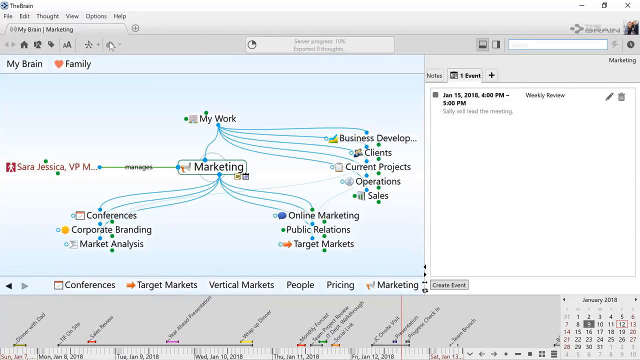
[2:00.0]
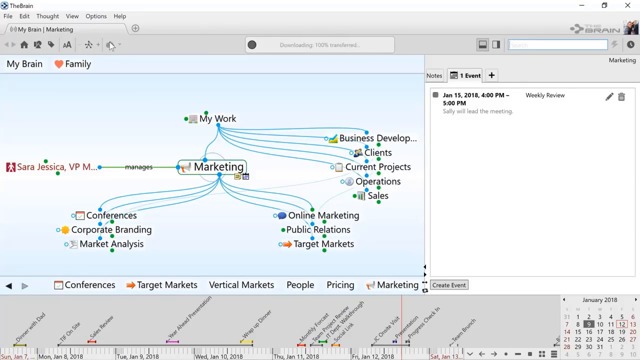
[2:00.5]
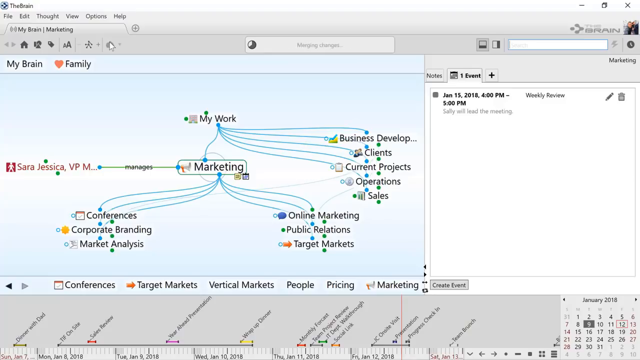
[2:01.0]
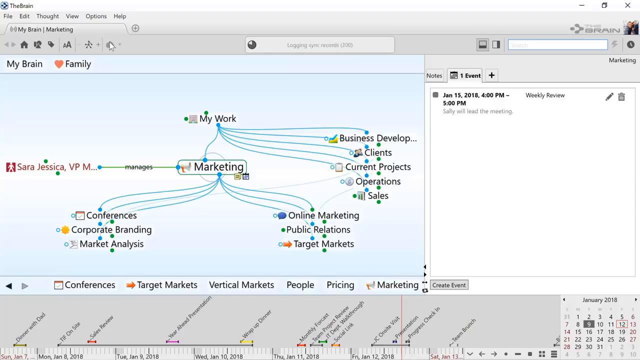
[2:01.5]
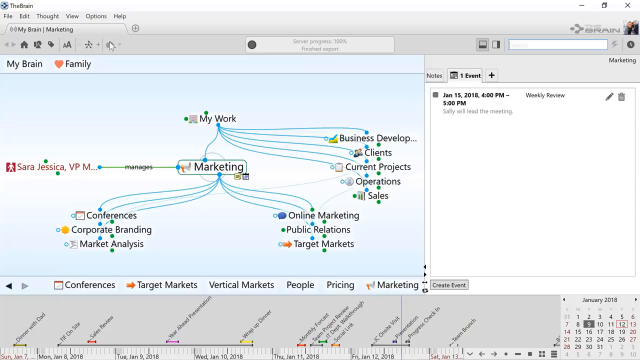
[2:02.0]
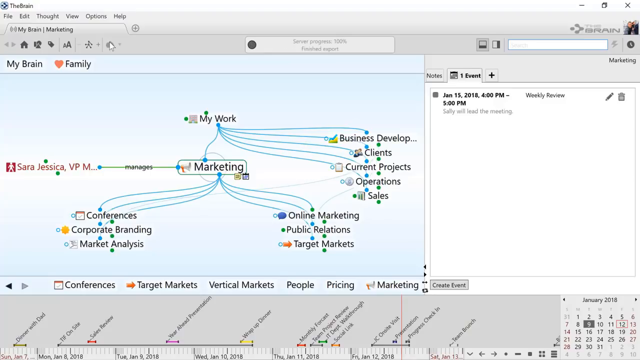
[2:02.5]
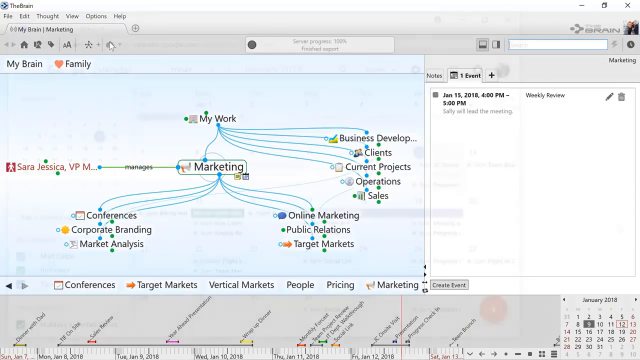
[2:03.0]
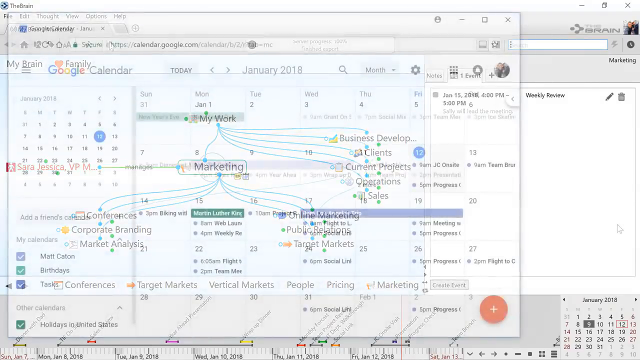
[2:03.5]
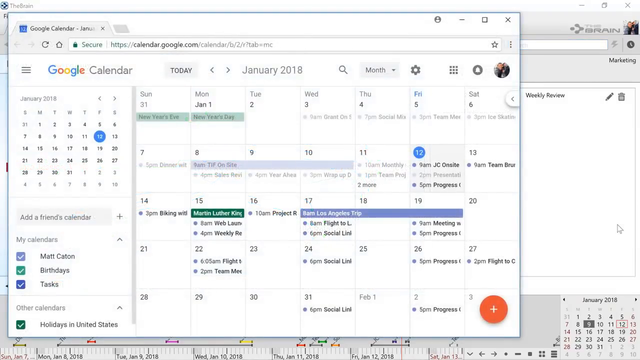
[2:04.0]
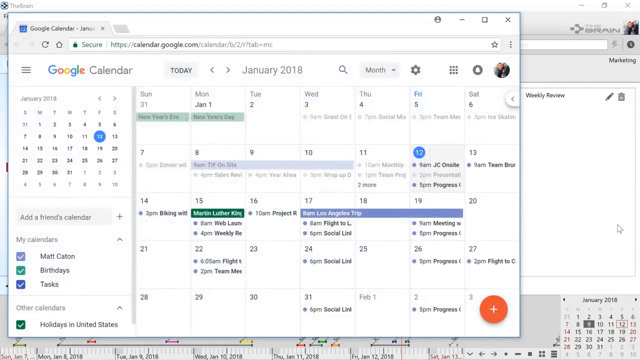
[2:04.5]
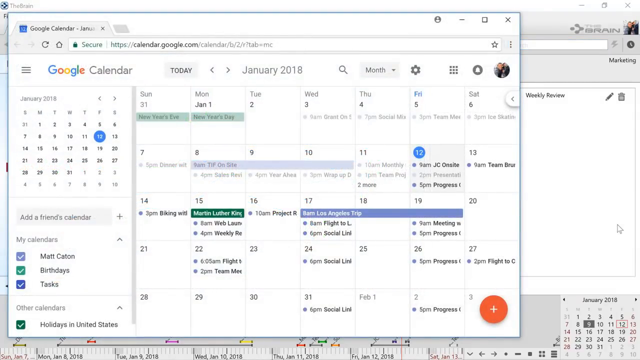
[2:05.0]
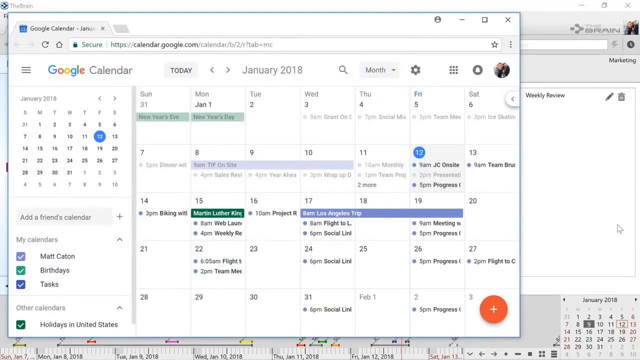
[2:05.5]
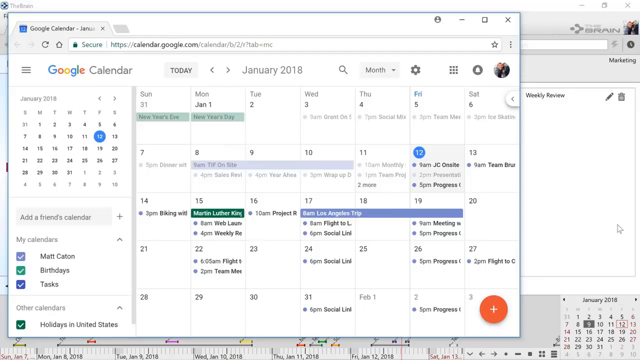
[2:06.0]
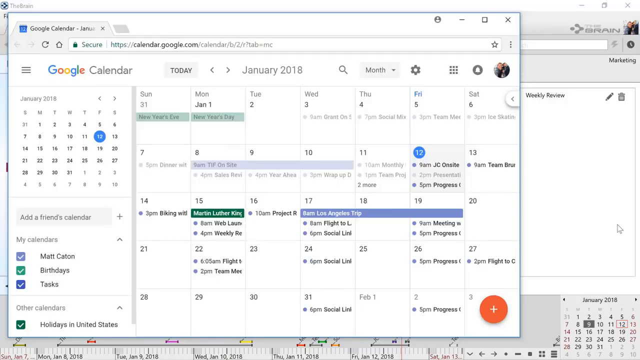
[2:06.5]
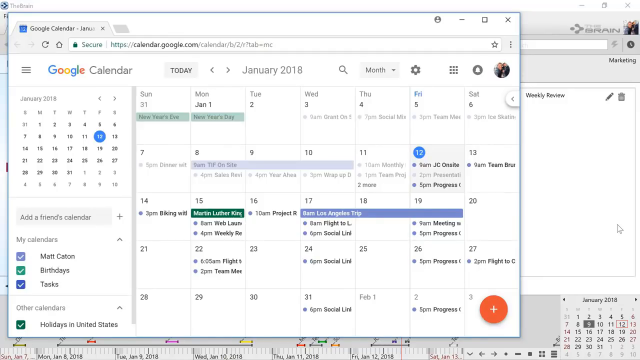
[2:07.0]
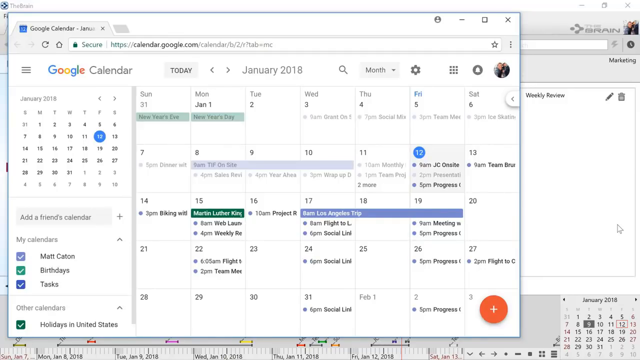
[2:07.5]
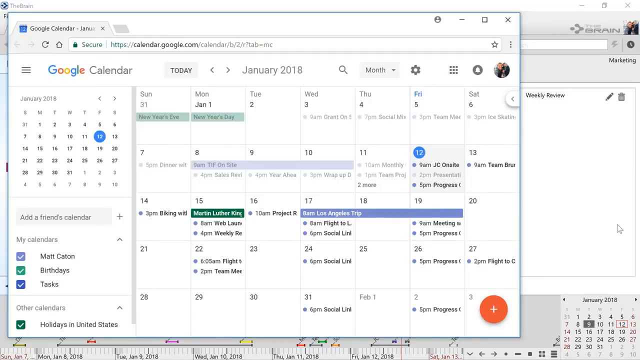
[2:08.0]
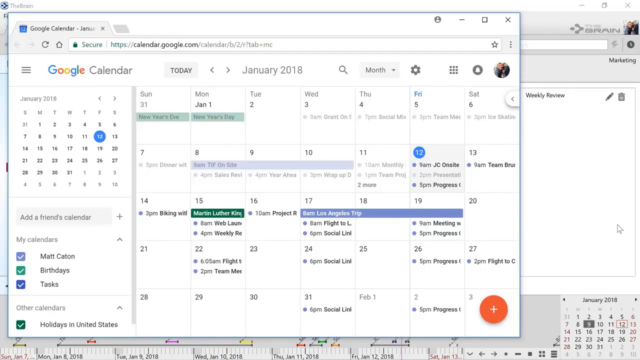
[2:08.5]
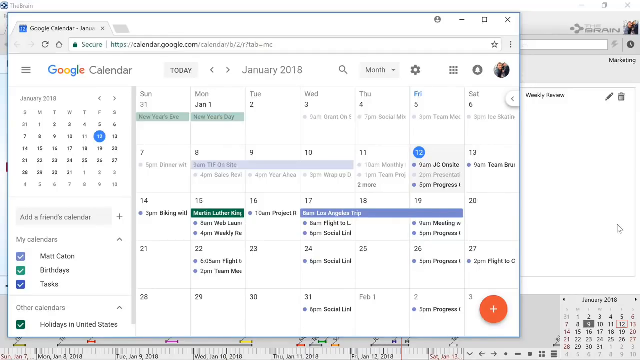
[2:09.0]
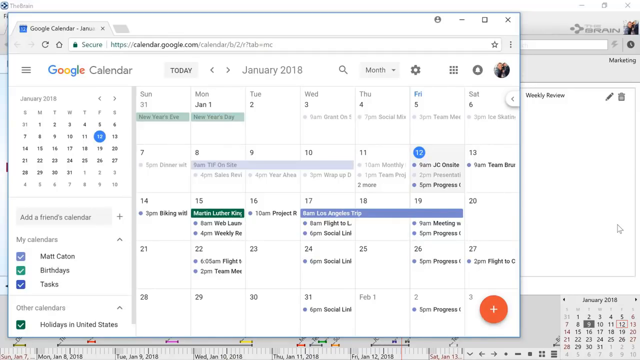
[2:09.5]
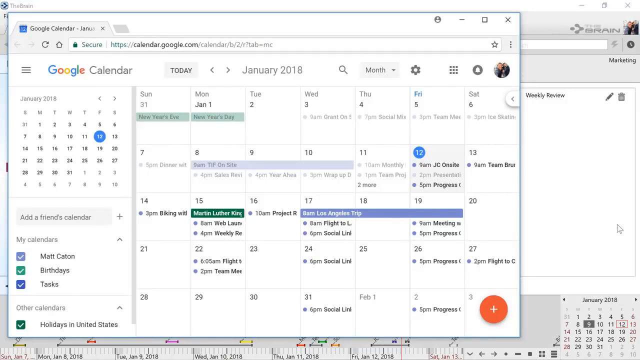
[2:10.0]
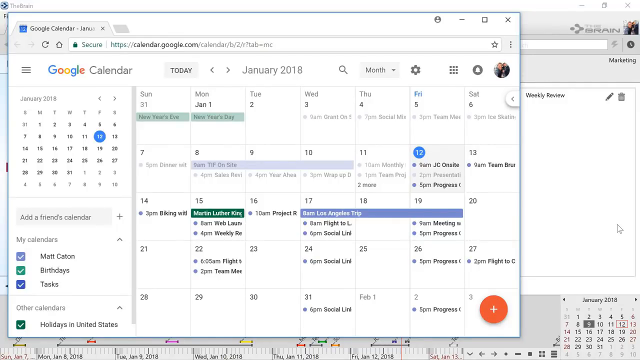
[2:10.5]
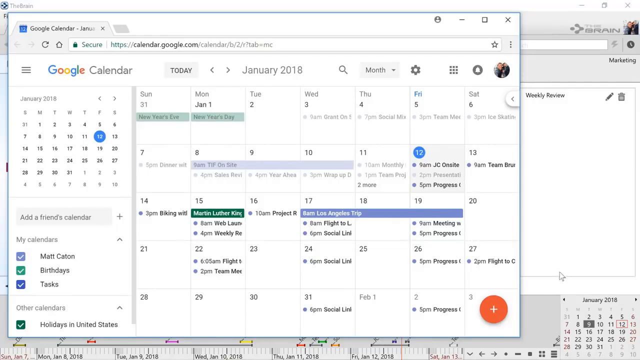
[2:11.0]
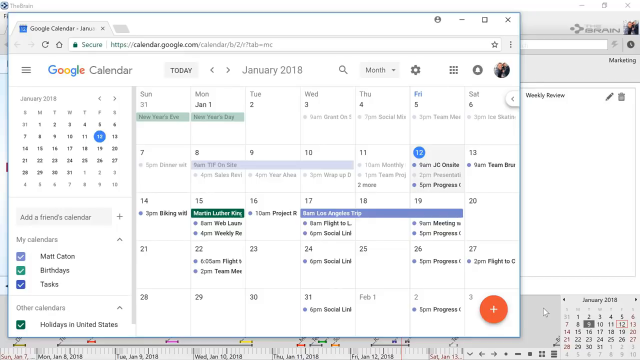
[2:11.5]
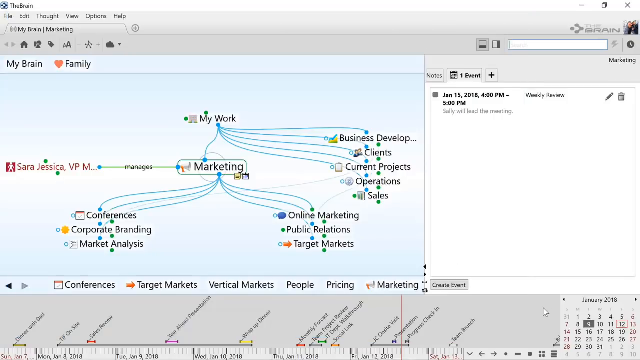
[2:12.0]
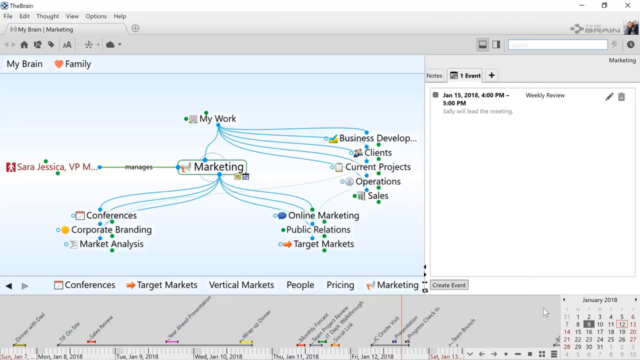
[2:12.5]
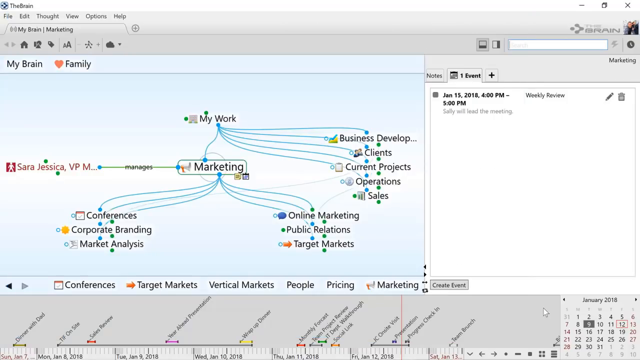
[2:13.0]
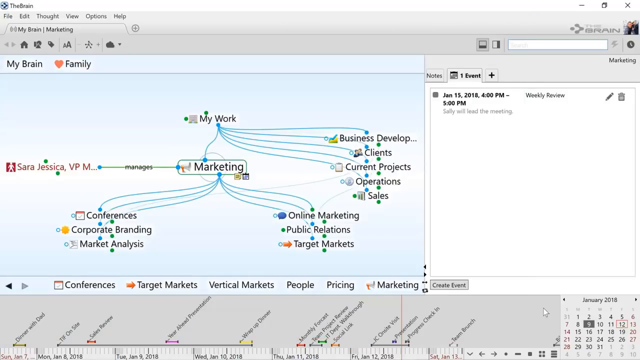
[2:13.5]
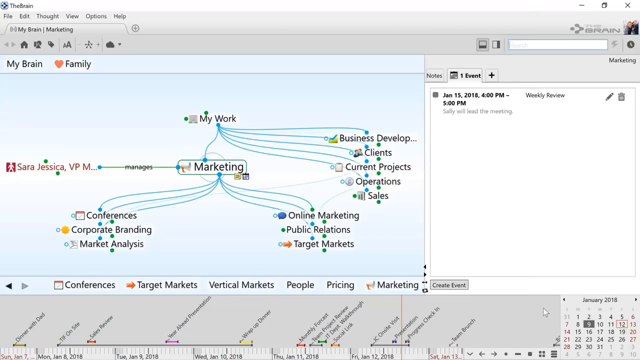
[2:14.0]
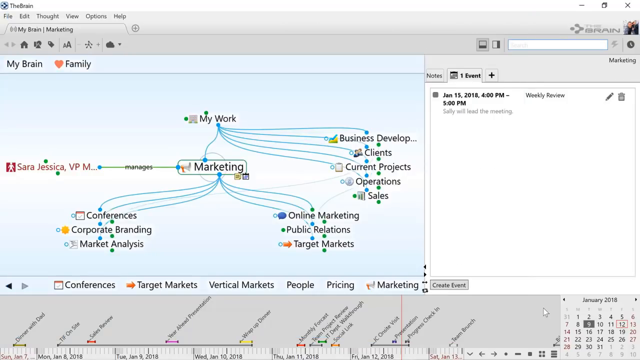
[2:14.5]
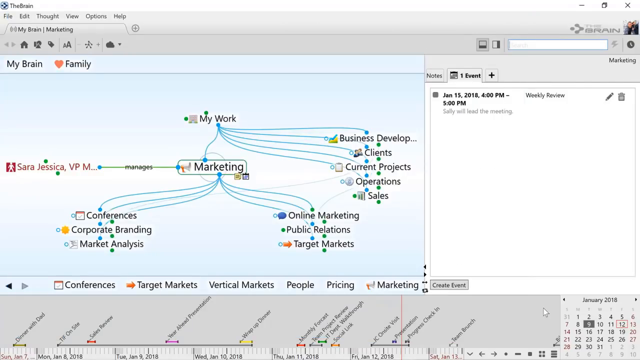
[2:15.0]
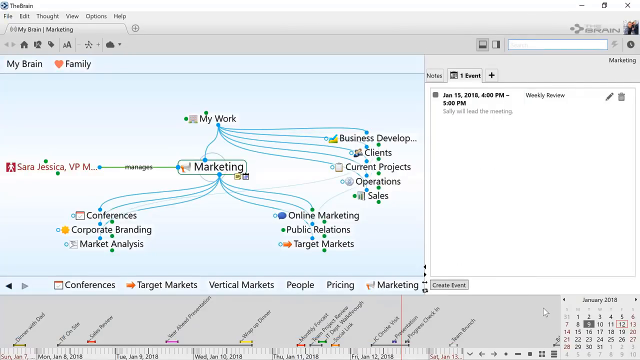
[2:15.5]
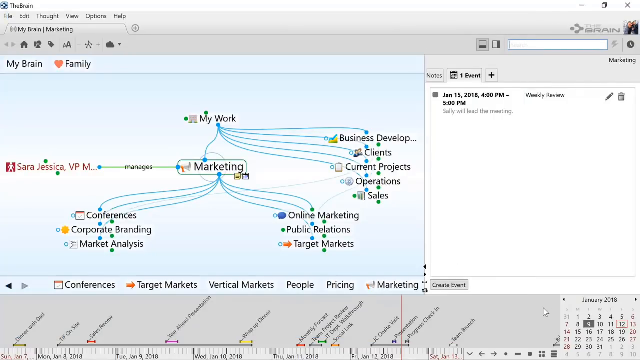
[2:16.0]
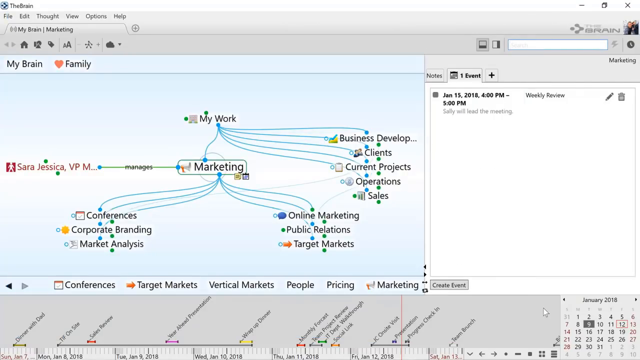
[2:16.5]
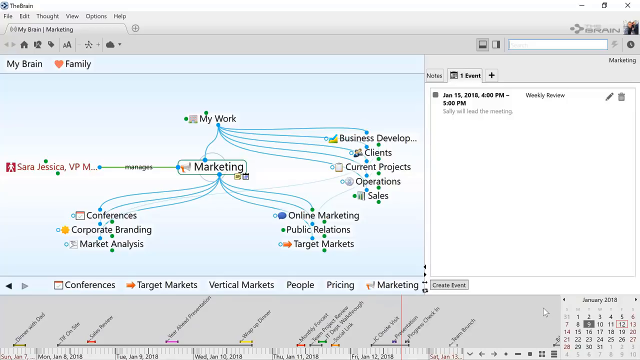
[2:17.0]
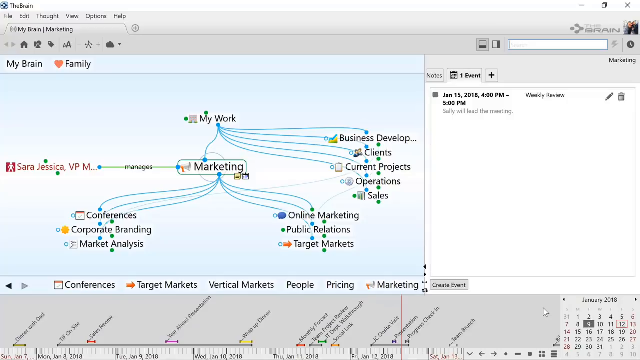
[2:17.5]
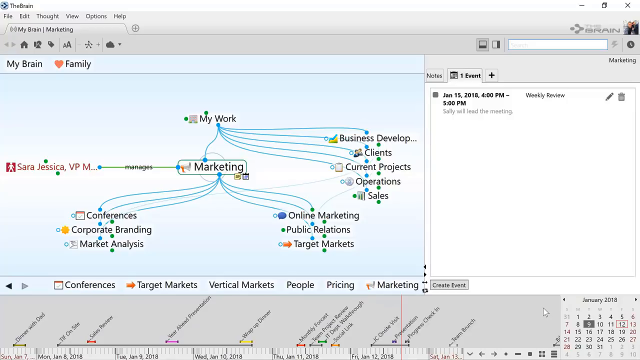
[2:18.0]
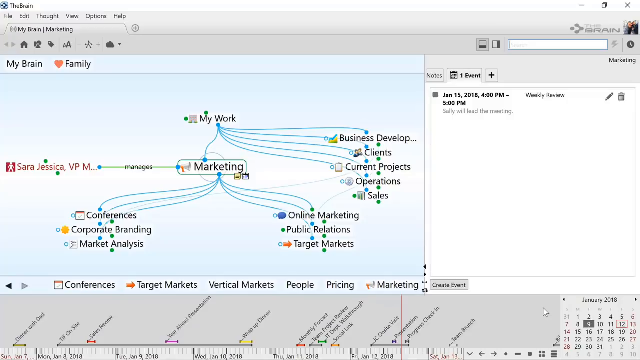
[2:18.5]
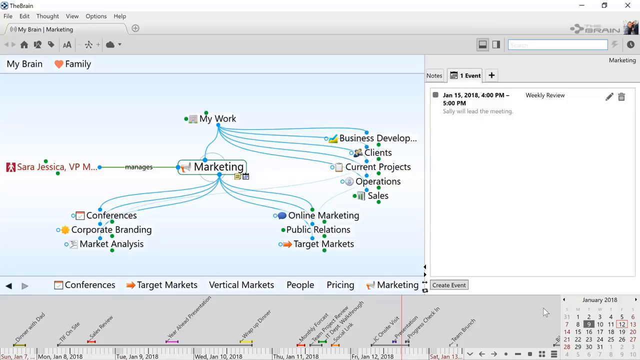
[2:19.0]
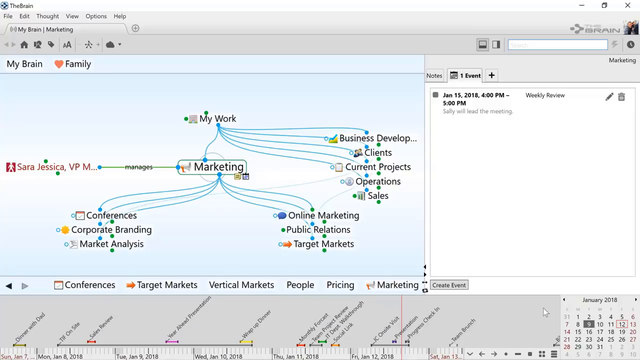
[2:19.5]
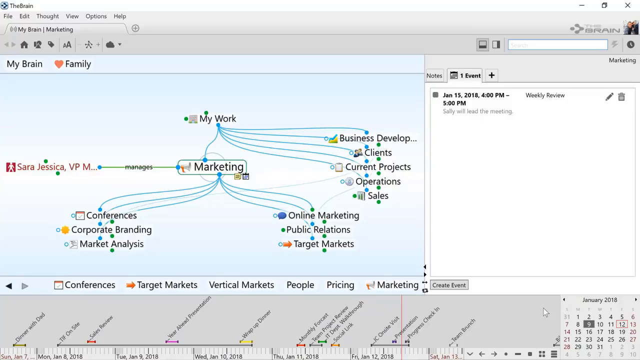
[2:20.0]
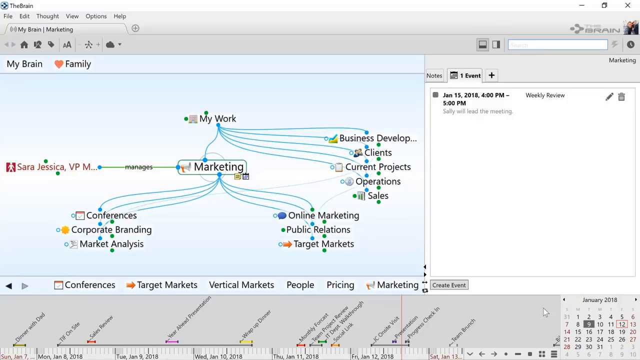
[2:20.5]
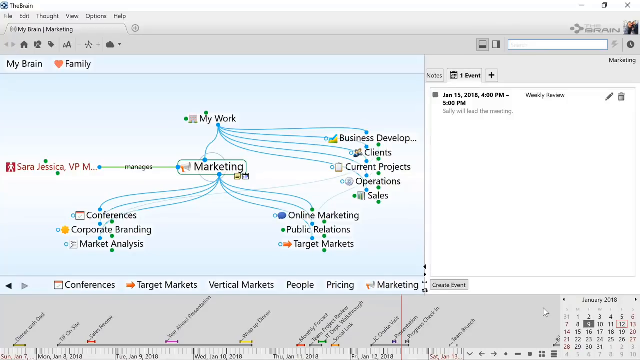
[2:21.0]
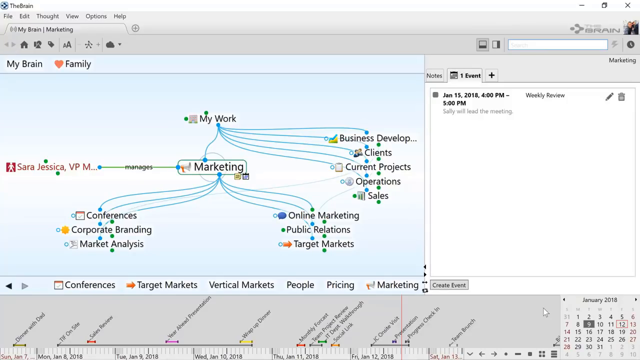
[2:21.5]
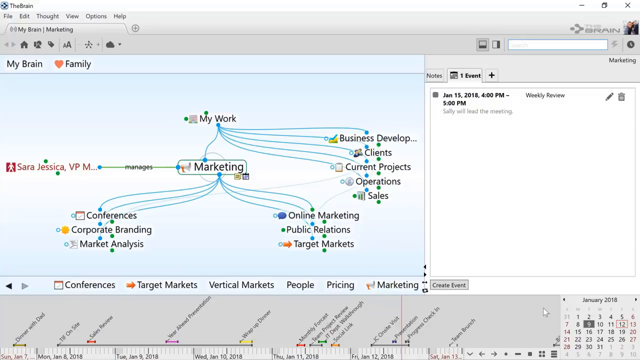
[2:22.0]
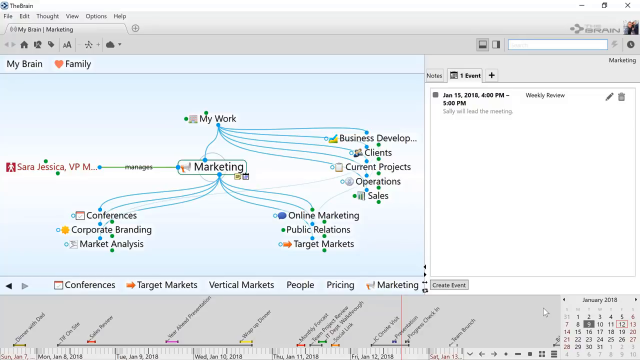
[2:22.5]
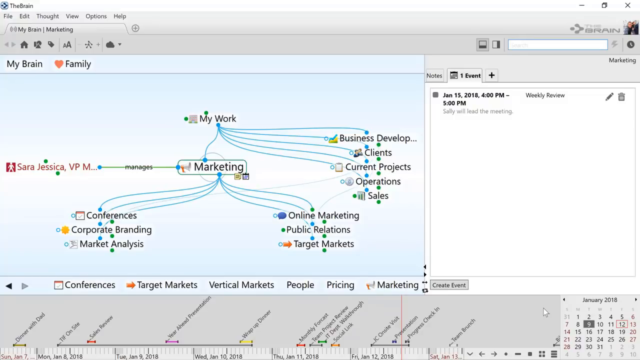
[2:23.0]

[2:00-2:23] A wide view shows the screen of the application called The Brain in a user's account while sync progress is underway, importing data to a Google account. The progress meter reaches 100%, and a Google Calendar pops up. Calendar items from The Brain now appear on the Google Calendar, apparently color-coded. Calendars listed include the user's calendar, the birthday calendar, the task calendar, and the holiday calendar for the United States.